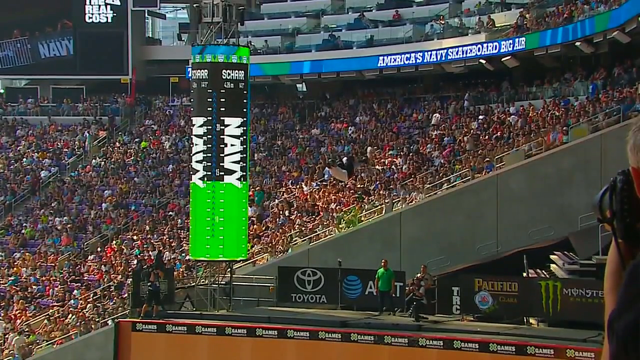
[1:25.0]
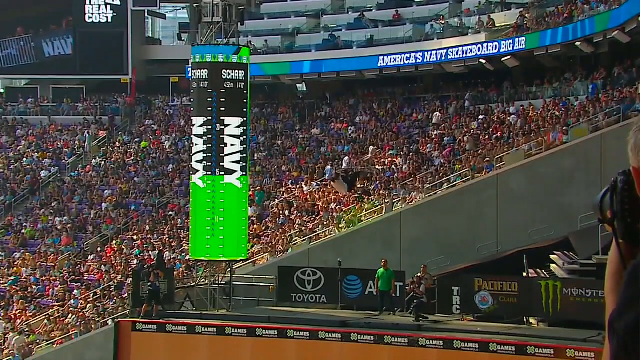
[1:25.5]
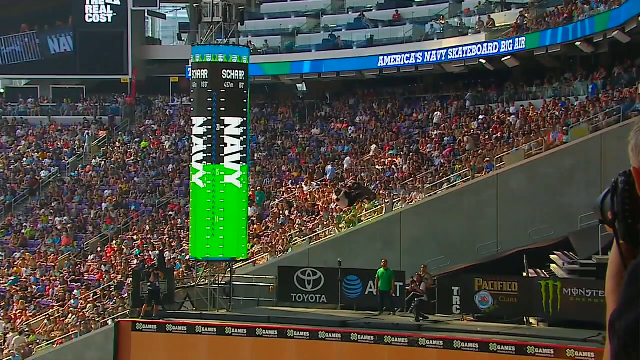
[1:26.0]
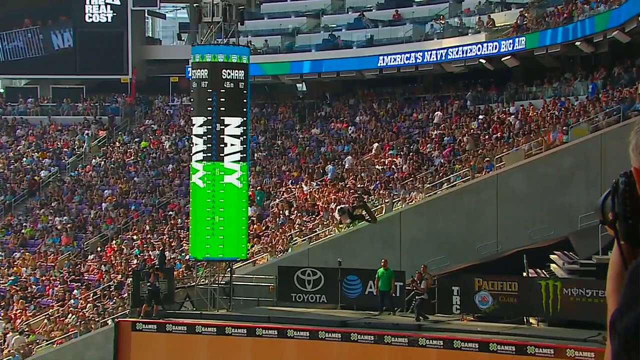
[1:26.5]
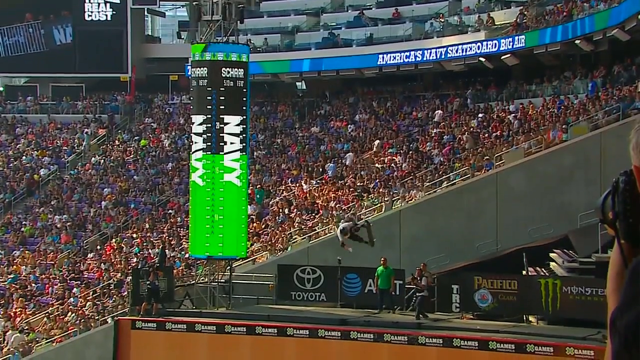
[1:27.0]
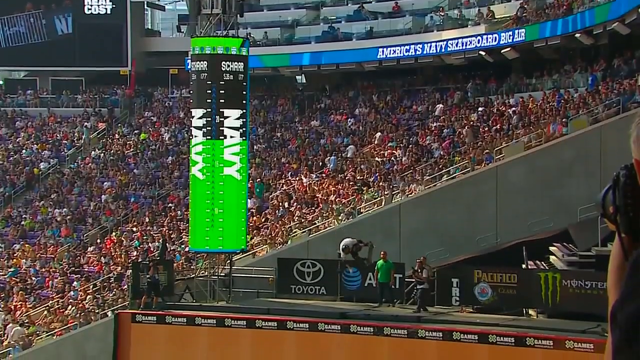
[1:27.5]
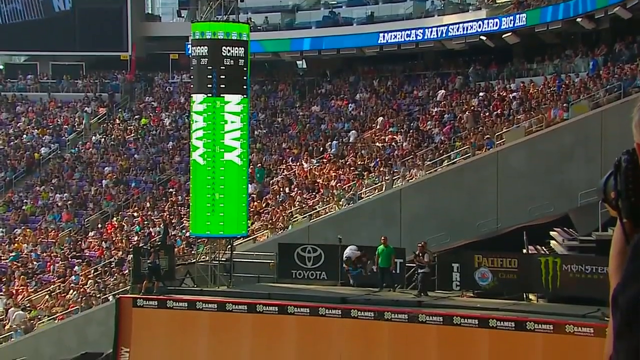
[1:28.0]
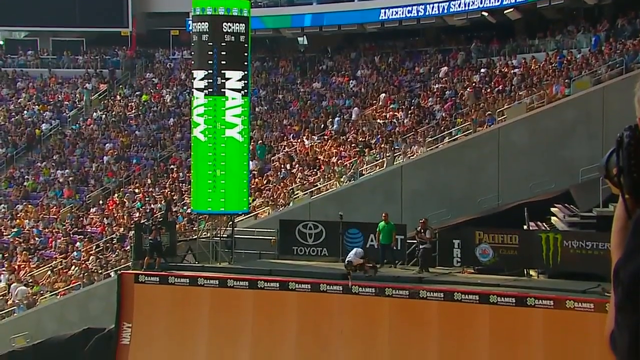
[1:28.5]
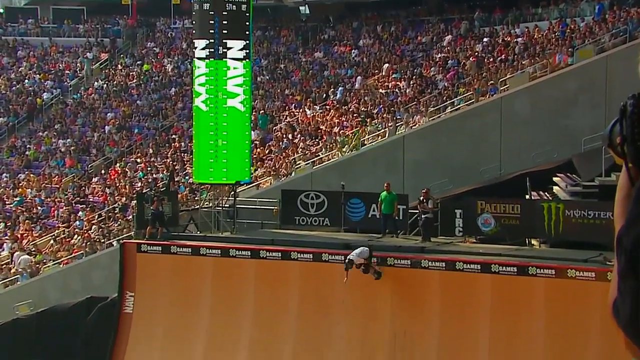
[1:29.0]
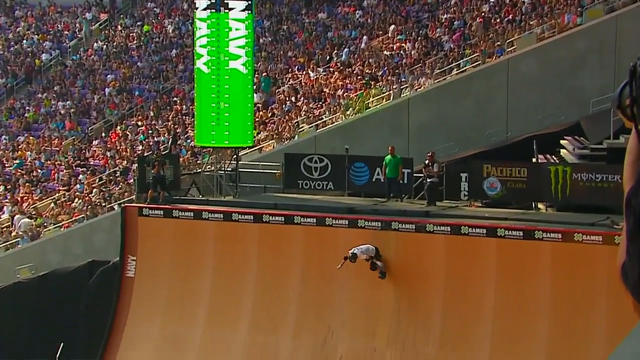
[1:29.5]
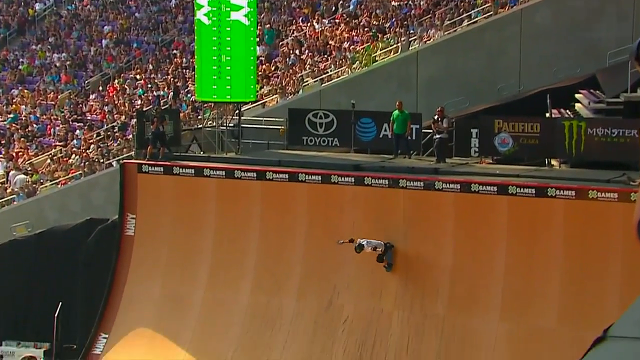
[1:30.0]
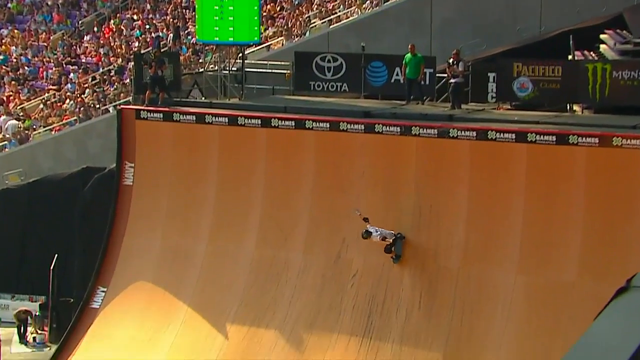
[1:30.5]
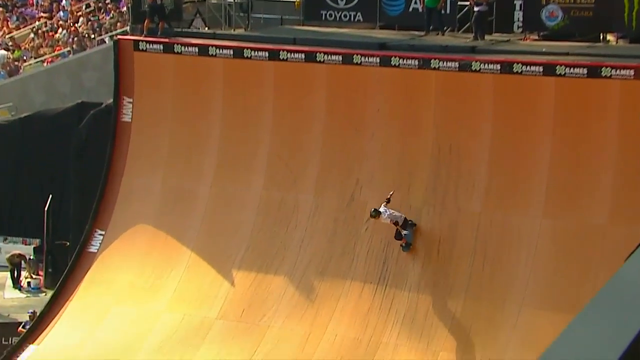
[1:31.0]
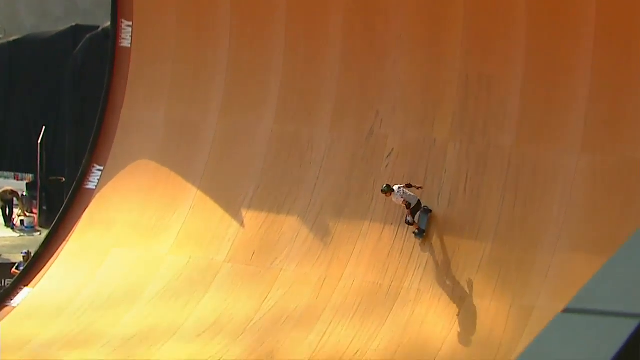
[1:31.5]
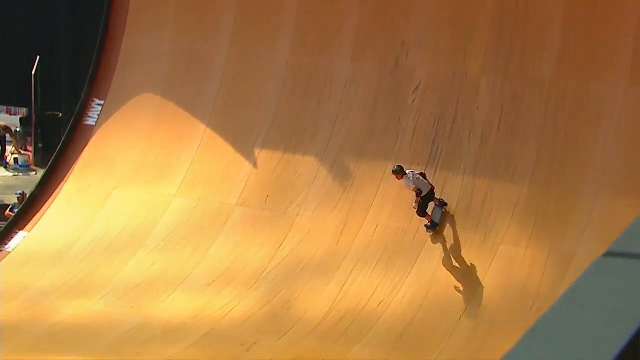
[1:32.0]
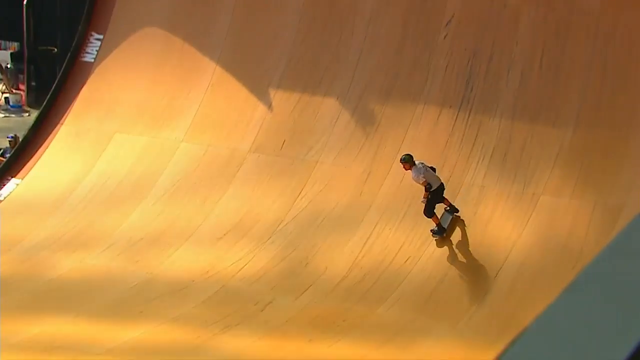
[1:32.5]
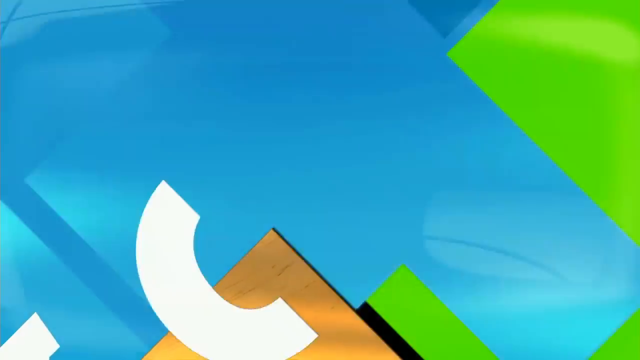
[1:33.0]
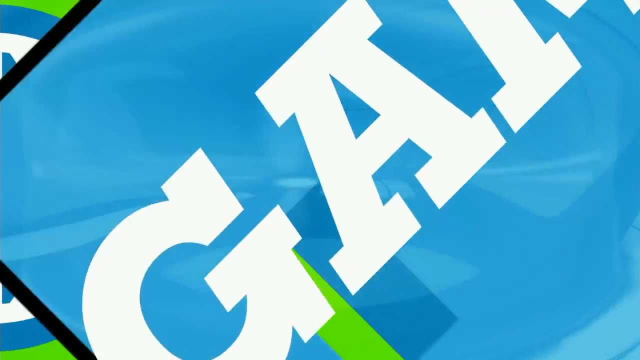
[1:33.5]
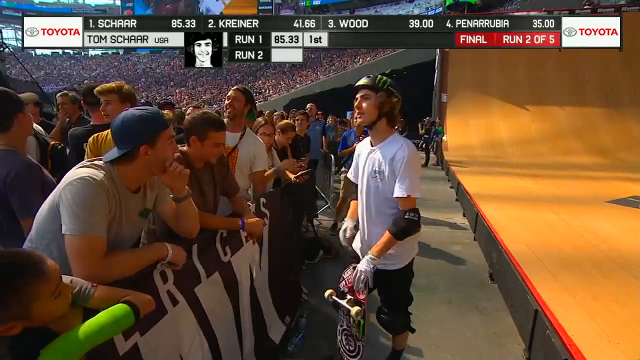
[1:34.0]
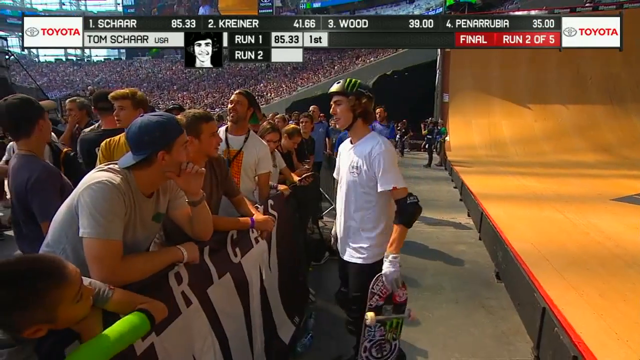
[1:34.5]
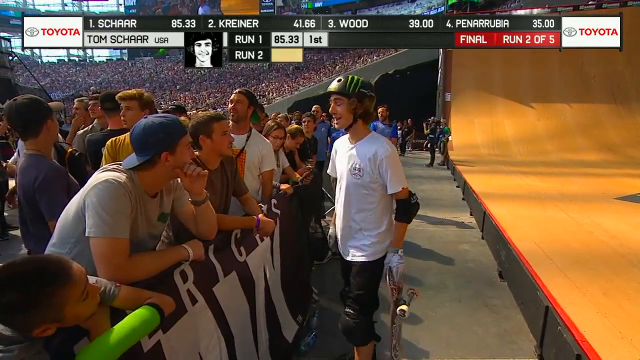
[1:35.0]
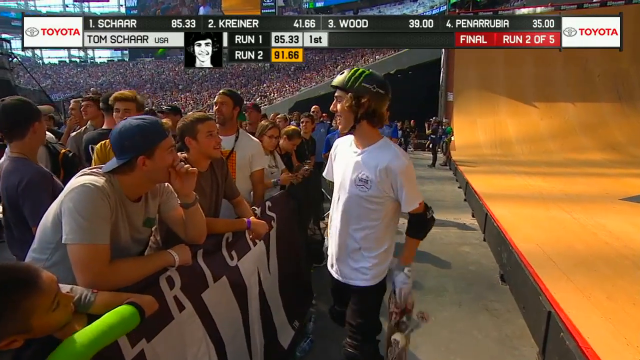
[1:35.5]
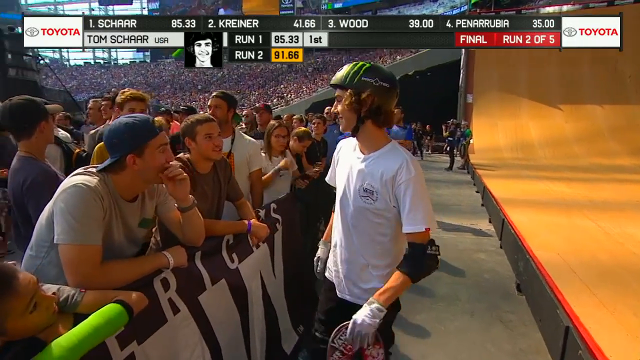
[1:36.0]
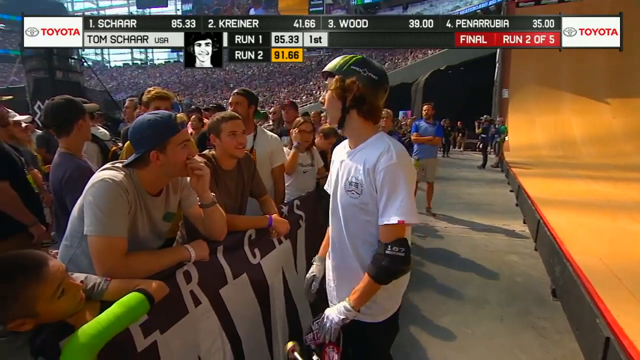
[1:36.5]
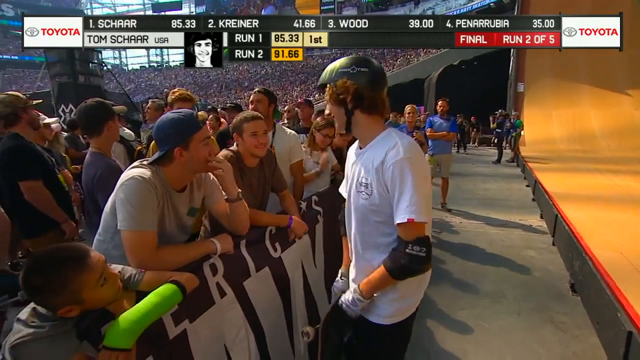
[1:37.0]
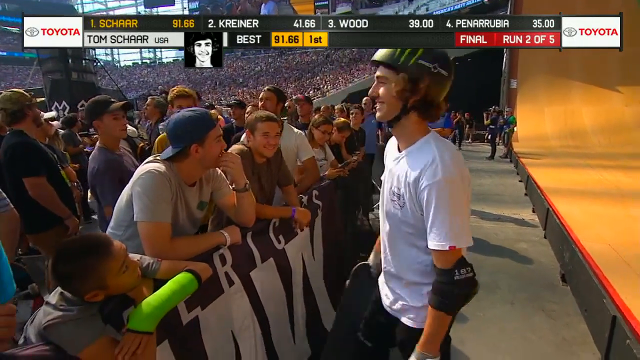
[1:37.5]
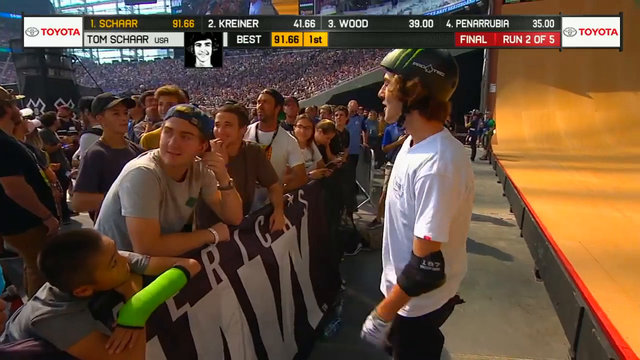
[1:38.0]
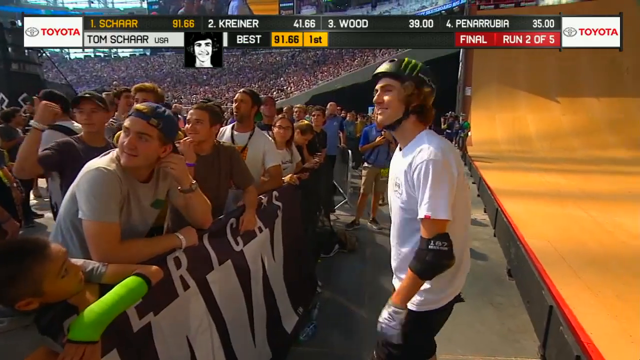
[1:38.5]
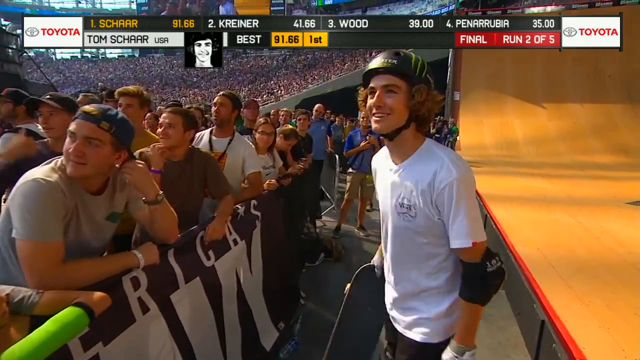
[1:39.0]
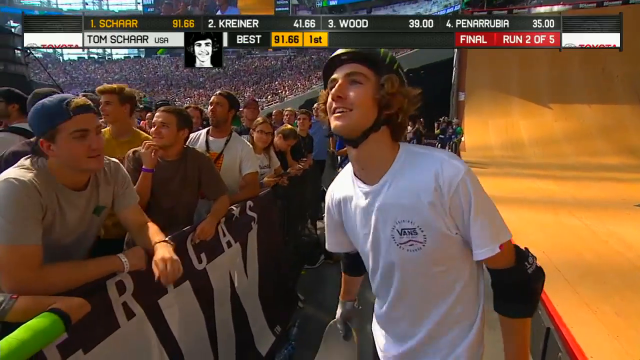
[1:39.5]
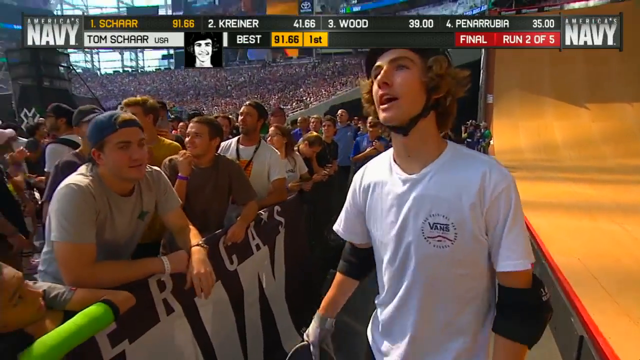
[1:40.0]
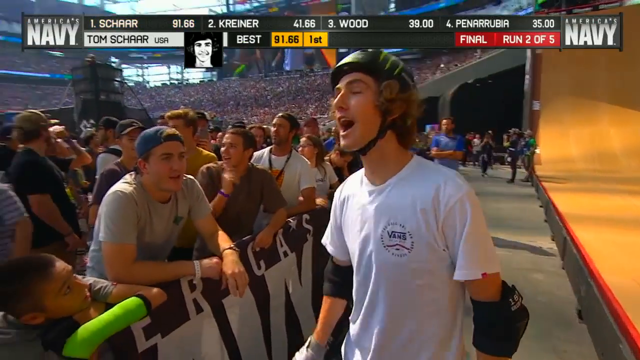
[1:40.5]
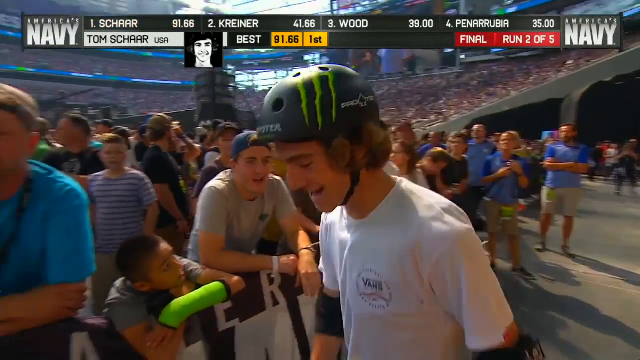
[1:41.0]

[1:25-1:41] Tom is in midair, possibly as high as two six-foot-tall men stacked on top of each other above the half pipe. The green big air meter fills to maybe about 80%. Tom comes down from the rotation toward the top of the half pipe and sticks the landing, hitting the half pipe maybe about 15 feet down. An X Games logo in black and red pops up on the right-hand side: a black circle, a red X outlined in white, and "games" below it. Tom continues downward, followed by an X Games film transition in green, white and blue. Tom is then standing to the side of the half pipe, where fans are behind a barricade bearing an advertisement for America's Navy. There is a kid on the left and some adults, and an Asian kid on the lower right has a green cast on his arm. Tom smiles and talks to them, then looks upward and yells hi to someone off screen.